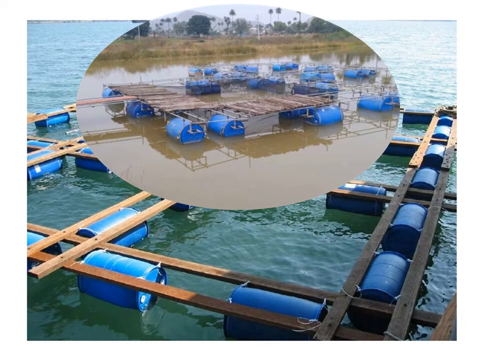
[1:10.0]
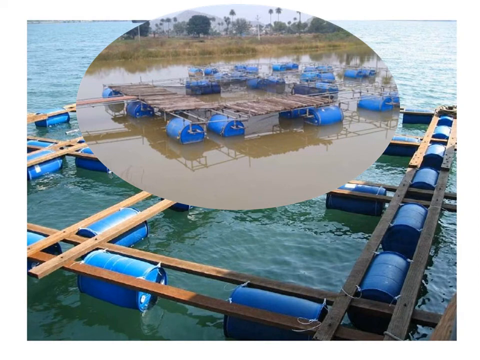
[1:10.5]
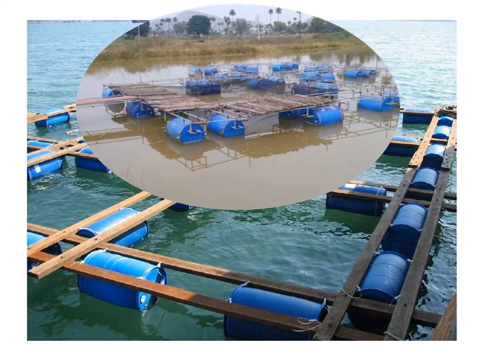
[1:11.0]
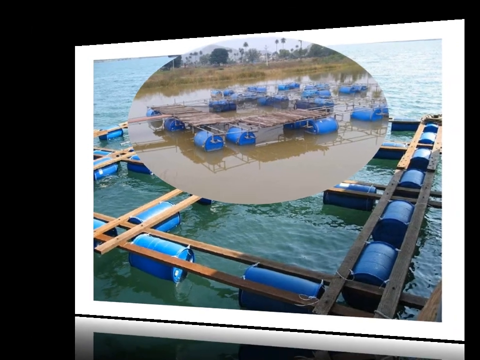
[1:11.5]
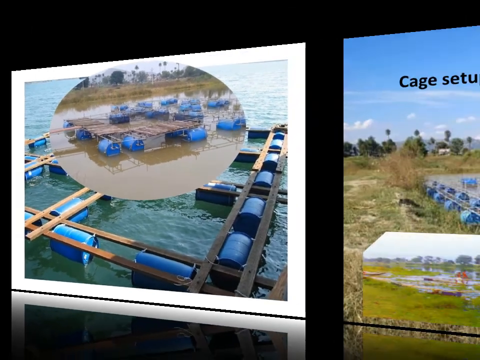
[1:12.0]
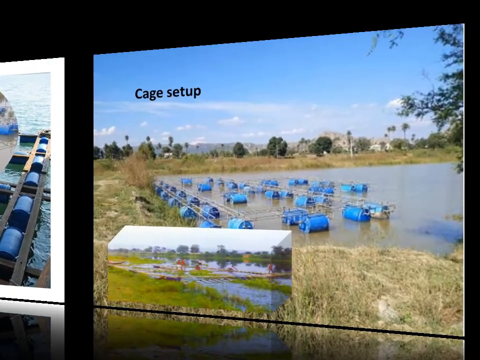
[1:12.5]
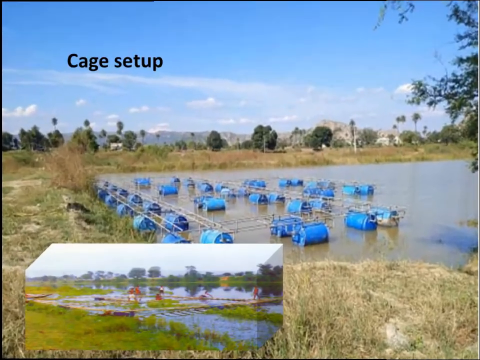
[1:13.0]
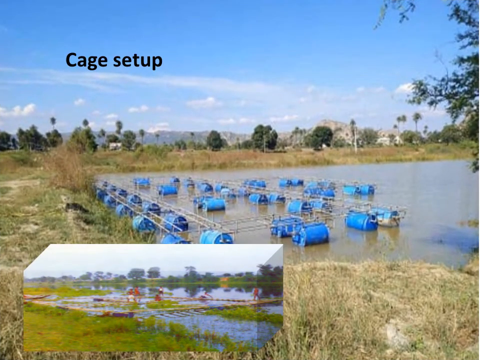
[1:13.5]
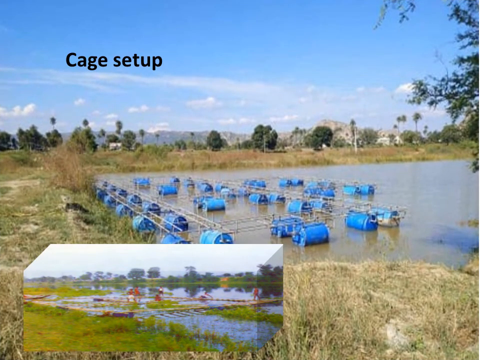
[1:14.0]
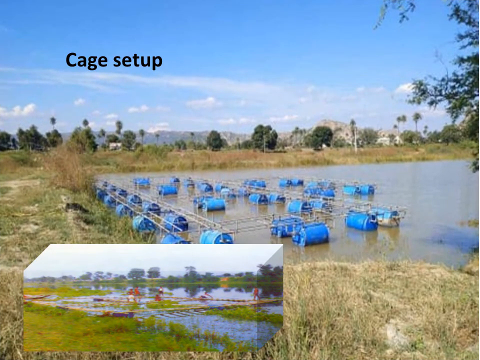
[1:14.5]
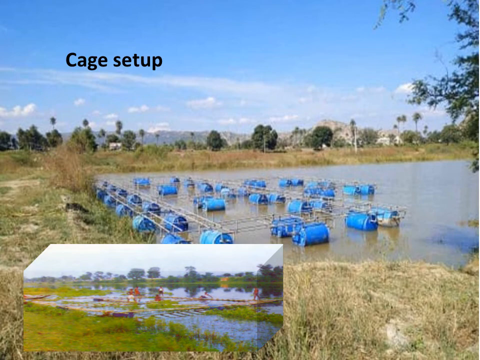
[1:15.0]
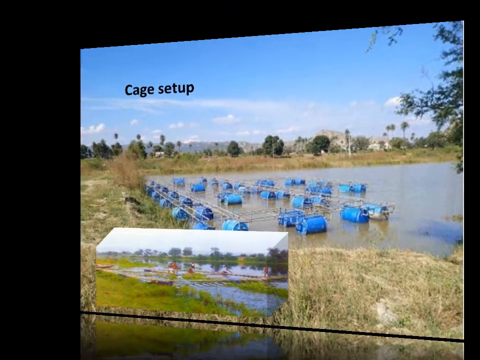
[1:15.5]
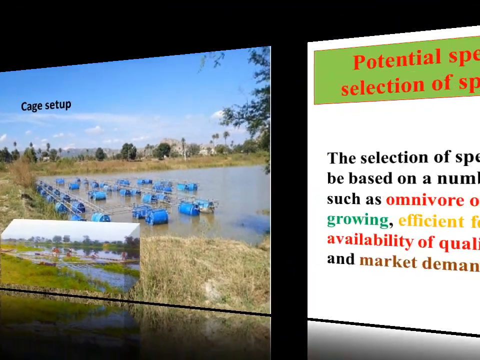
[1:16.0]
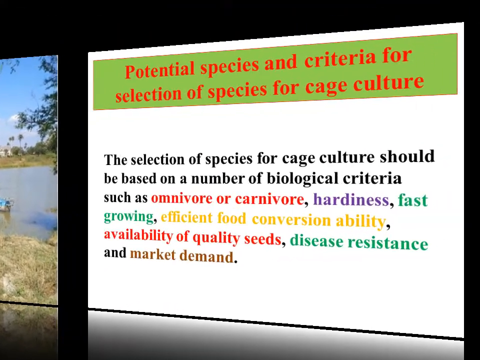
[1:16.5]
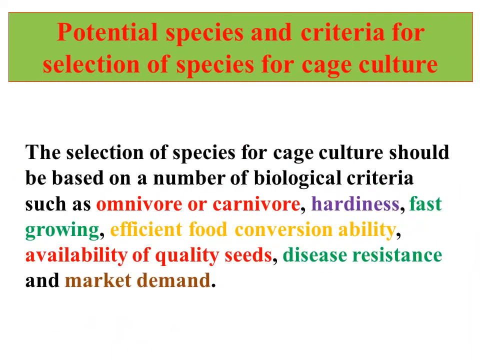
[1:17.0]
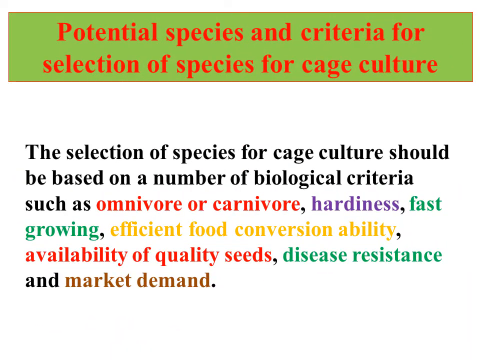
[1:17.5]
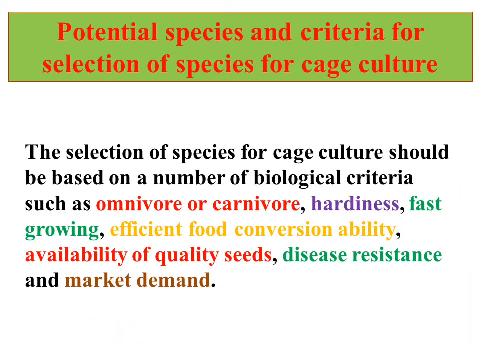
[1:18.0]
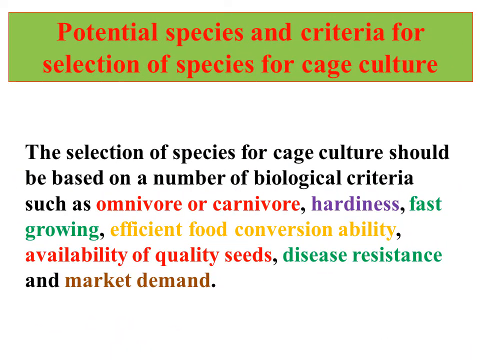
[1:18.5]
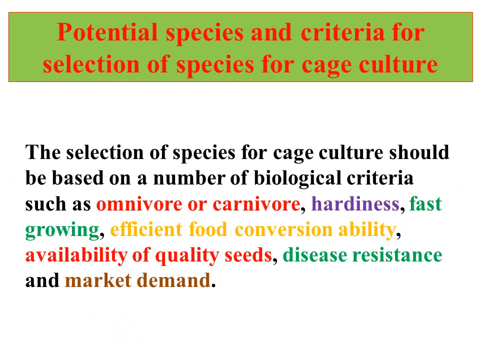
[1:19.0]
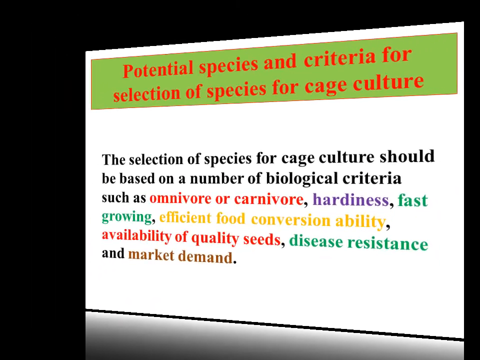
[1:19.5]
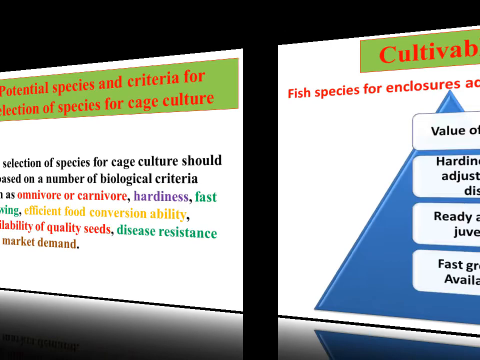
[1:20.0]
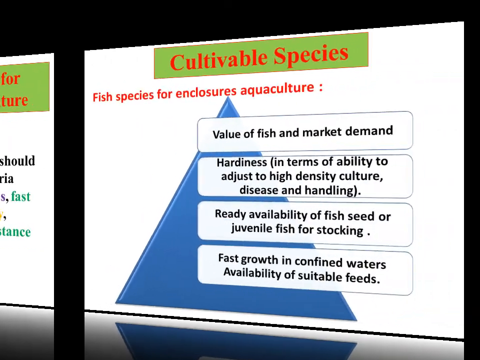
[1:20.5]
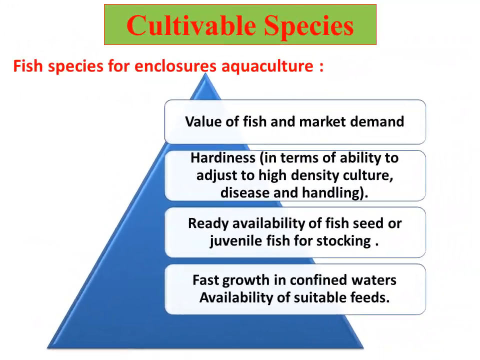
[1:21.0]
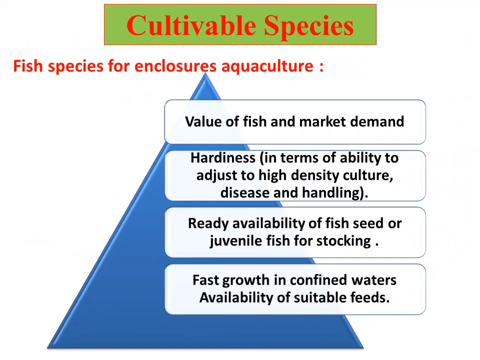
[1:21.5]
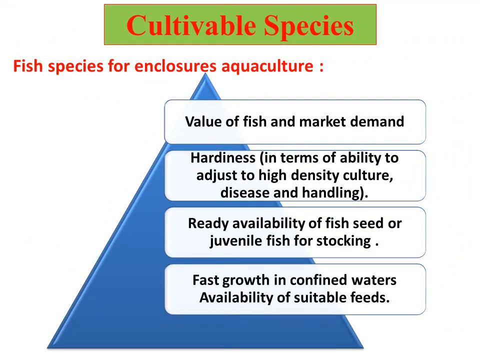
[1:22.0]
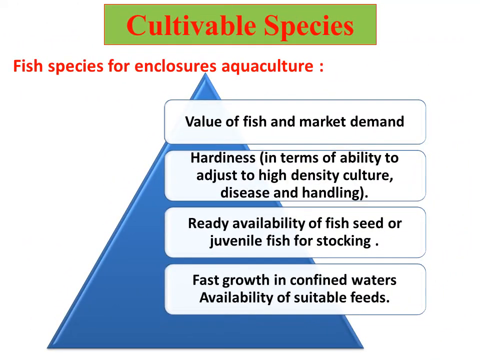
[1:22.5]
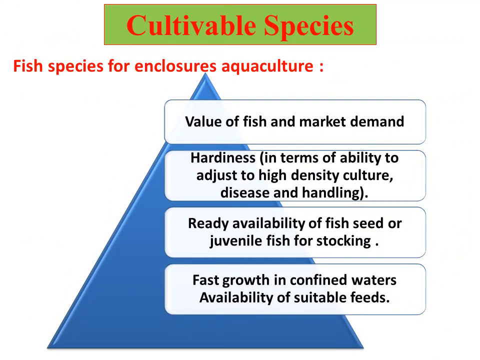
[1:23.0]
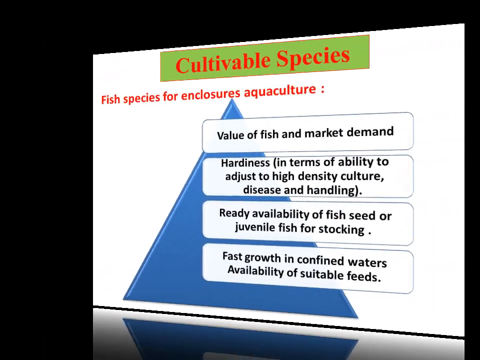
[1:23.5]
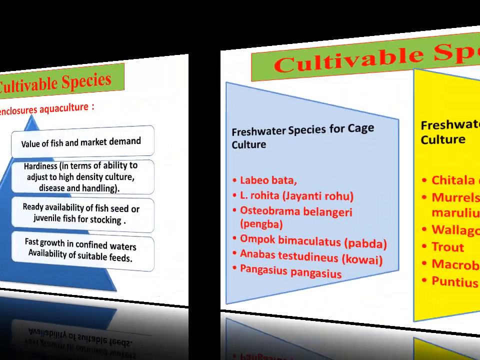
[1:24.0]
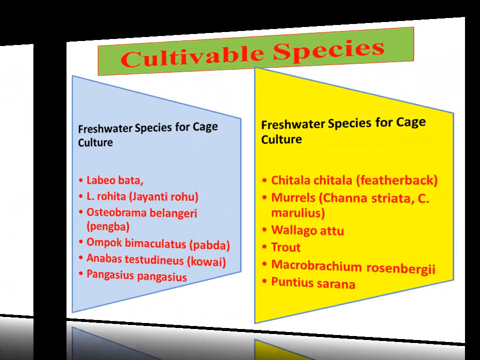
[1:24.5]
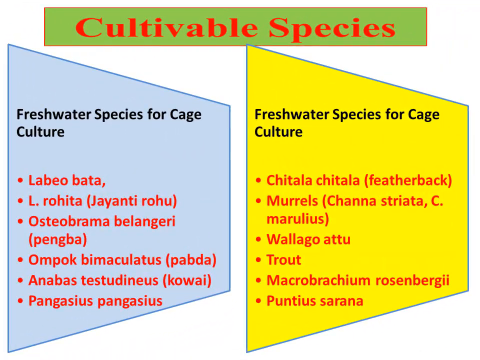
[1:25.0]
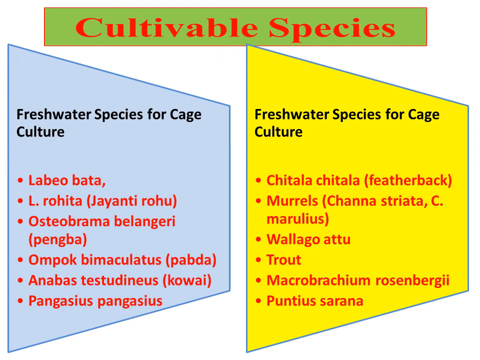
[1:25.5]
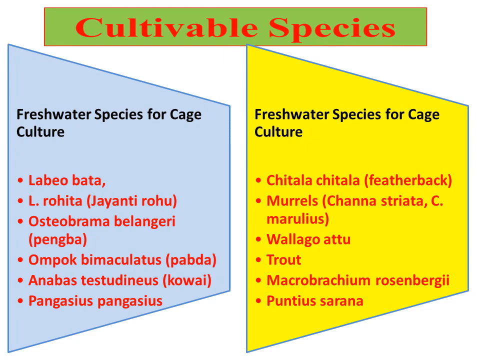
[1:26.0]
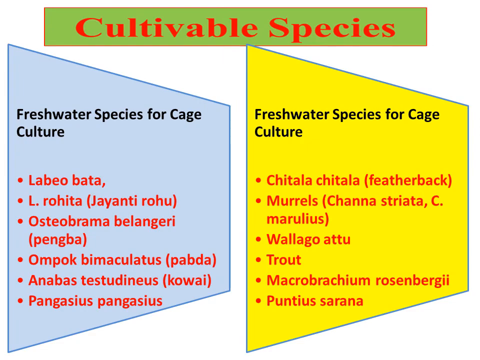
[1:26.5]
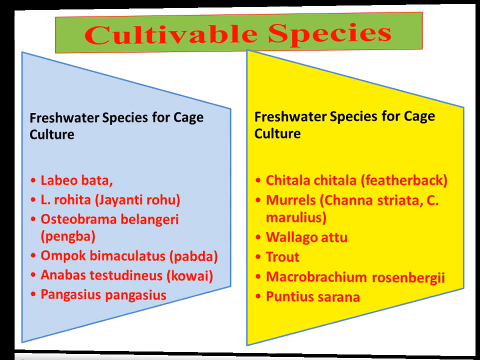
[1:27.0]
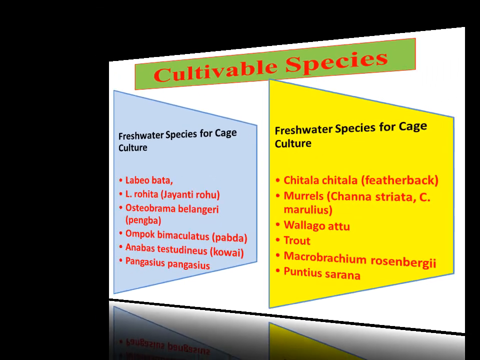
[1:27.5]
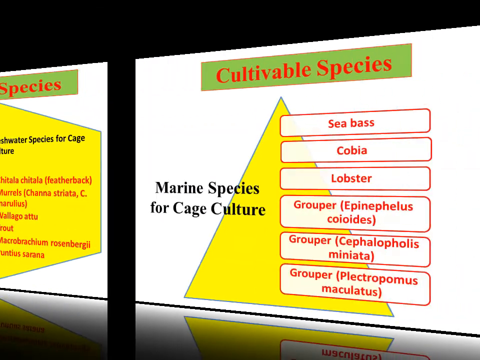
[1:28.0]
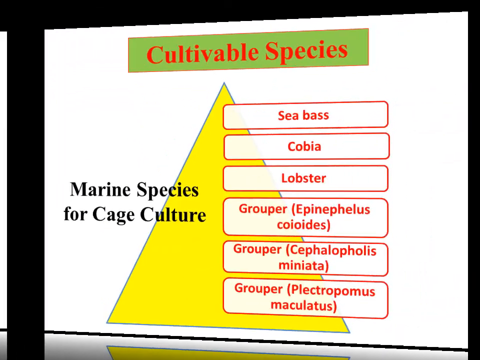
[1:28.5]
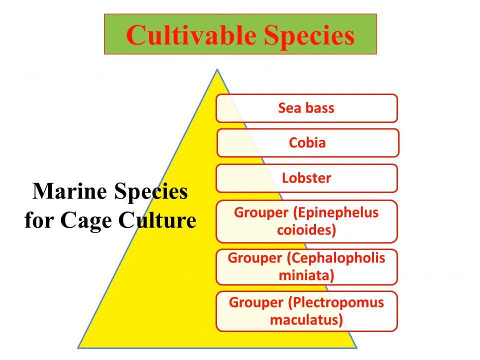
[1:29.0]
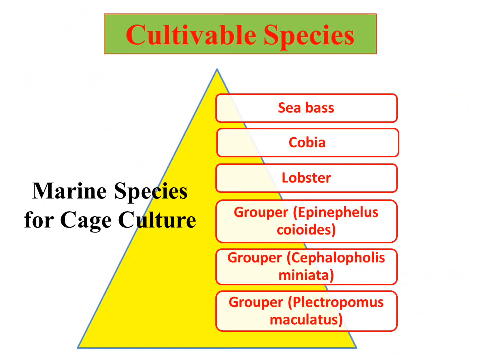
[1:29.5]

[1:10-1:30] A cage setup appears, looking like it is on a large pond or maybe a lake, built with wooden catwalks and blue drums or barrels used to float the catwalks. The slide then changes to show potential species and criteria for selection of species for cage culture: selection should be based on biological criteria such as whether the fish is an omnivore or carnivore, how strong it is, how fast it grows, whether it is disease-resistant, and market demand. The next image states that cultivable species must be fish that are valued and have market demand, strong, readily available for fish seeding, and able to grow fast in confined waters. Freshwater species listed for cage culture include anabas and trout. Marine species for cage culture are lobster, a shellfish, sea bass, and various kinds of grouper.